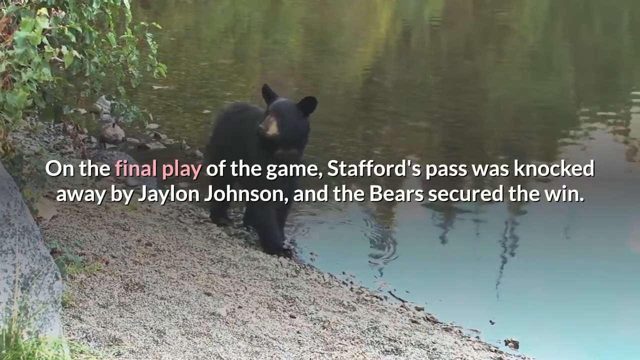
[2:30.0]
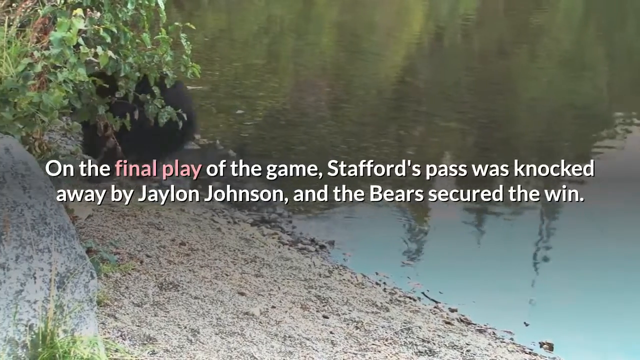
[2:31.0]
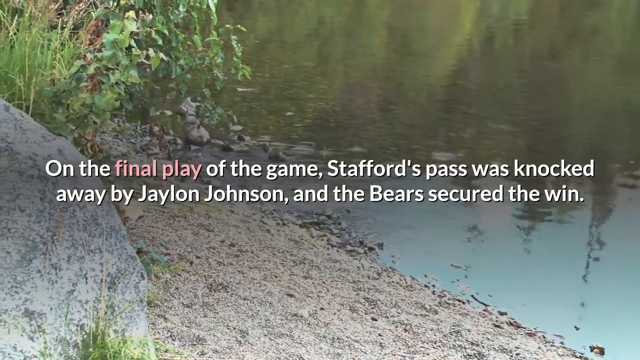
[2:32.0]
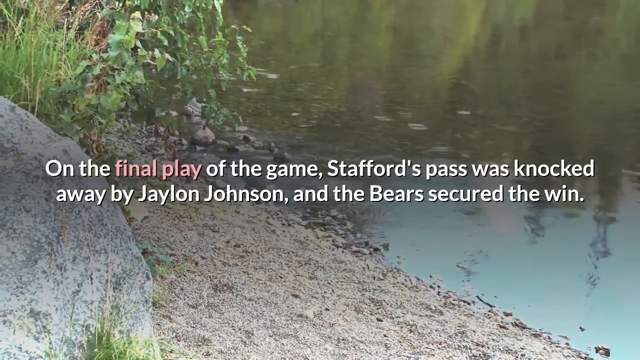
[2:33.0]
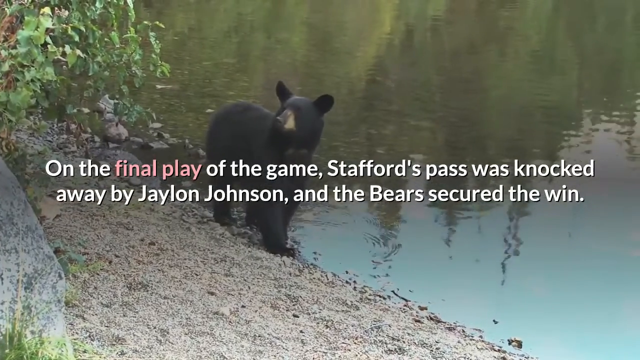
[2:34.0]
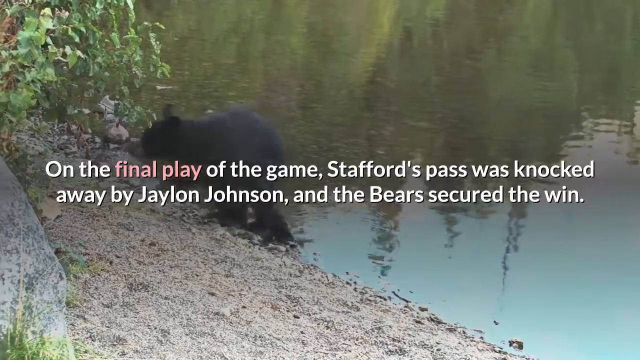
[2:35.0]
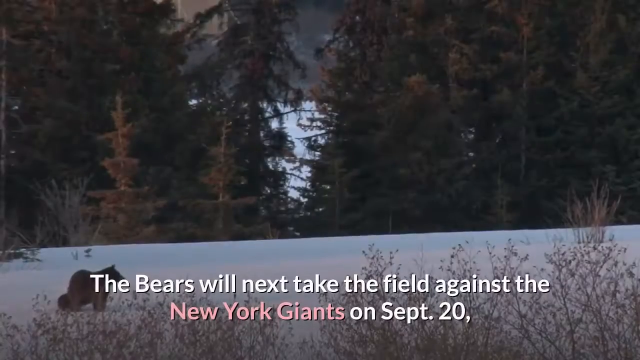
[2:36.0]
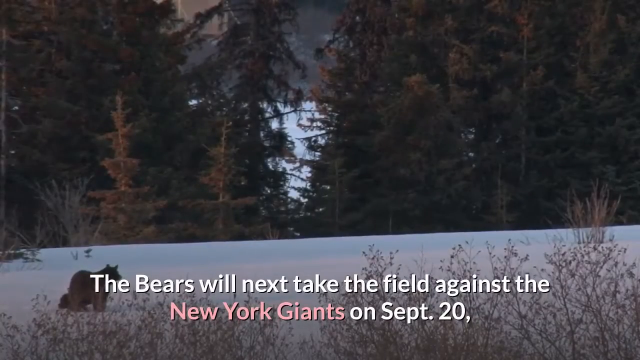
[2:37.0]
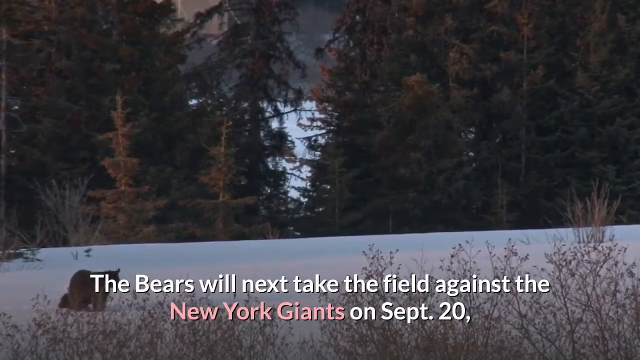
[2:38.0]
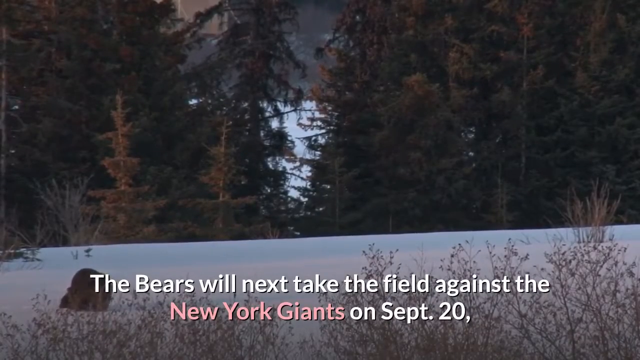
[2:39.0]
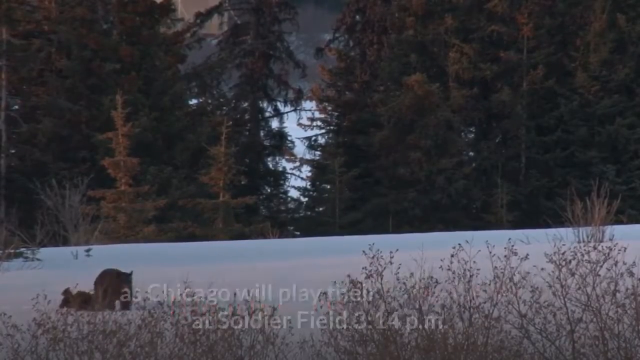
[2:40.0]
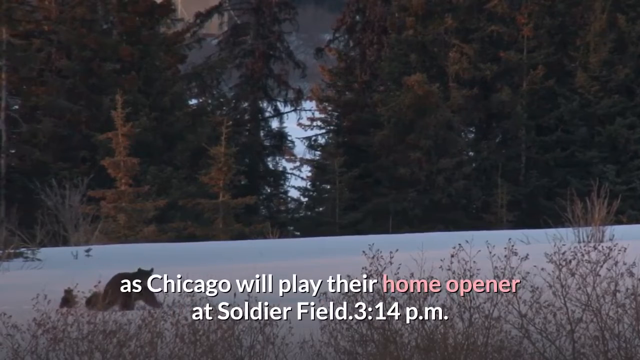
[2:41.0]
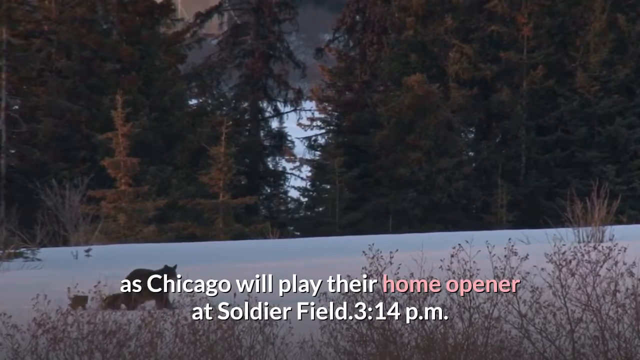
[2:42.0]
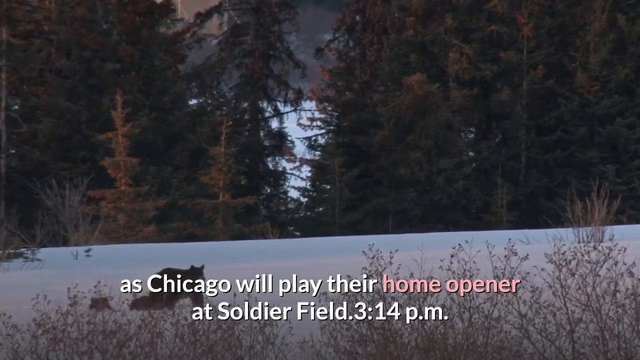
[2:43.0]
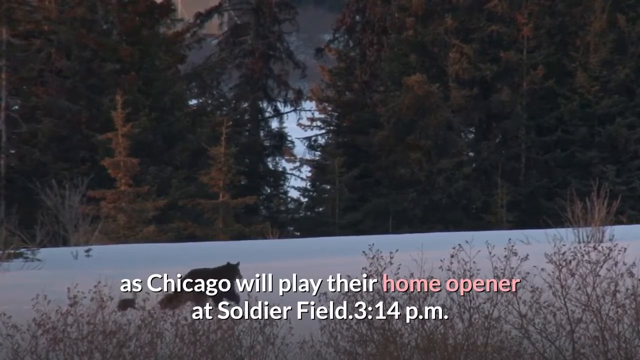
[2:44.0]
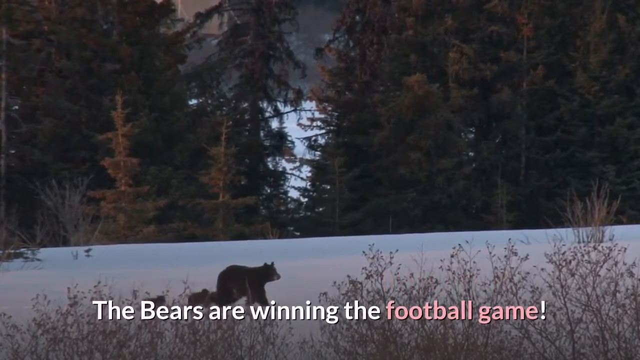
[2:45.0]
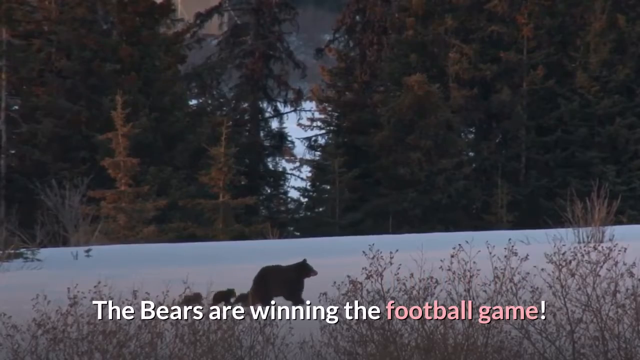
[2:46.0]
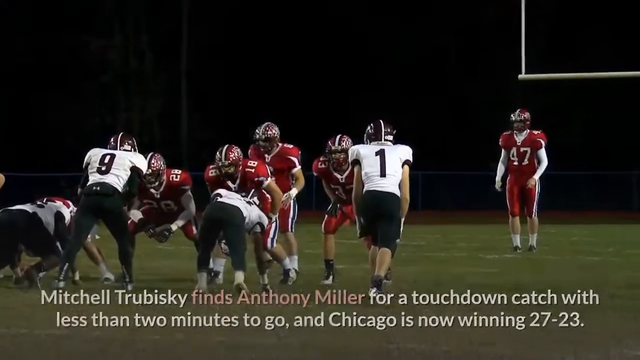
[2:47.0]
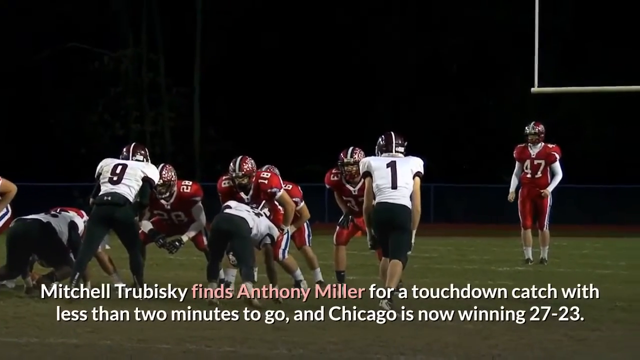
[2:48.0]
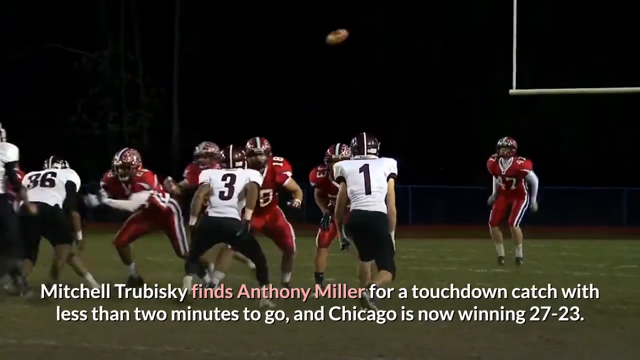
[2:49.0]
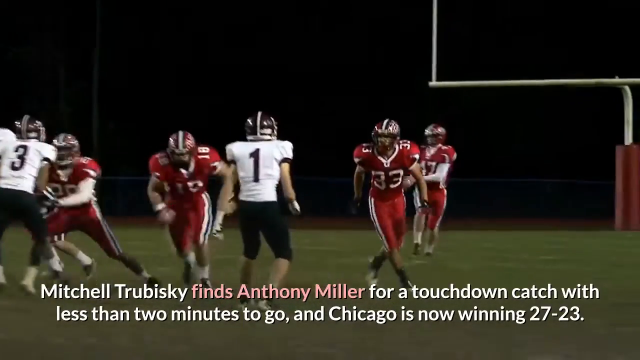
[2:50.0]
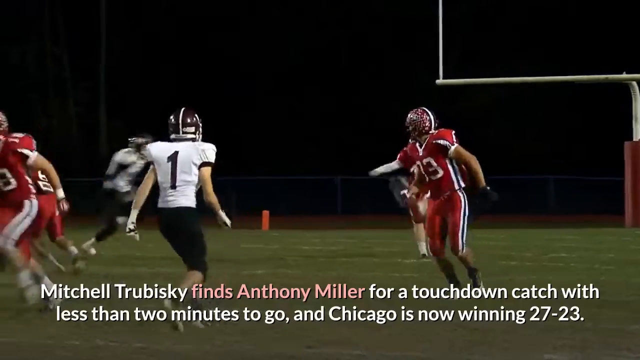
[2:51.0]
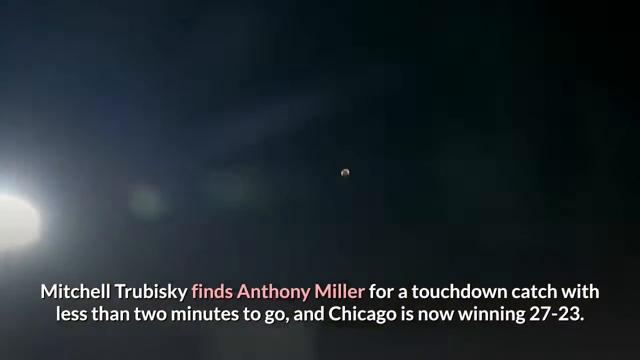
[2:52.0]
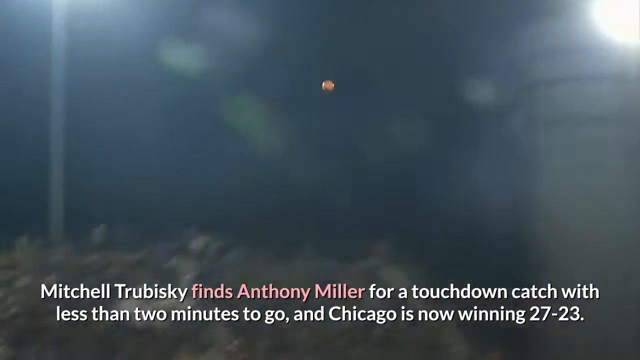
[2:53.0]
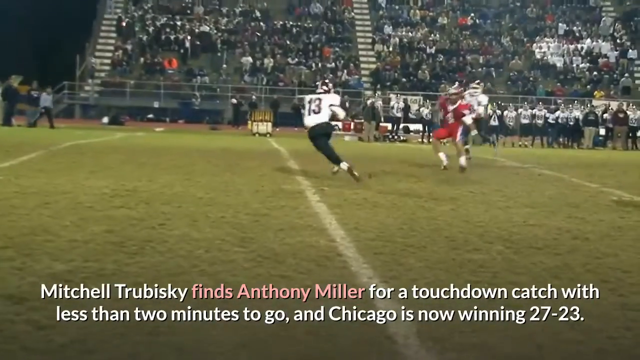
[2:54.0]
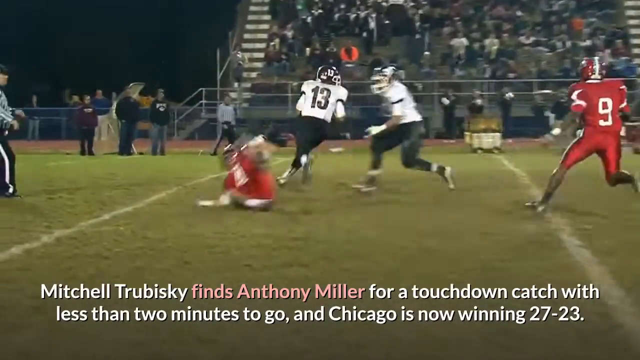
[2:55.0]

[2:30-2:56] Text reads "on the final play of the game, Stafford's pass was knocked away by Jalen Johnson and the Bears secured the win," over a background of the young bear along the riverbank looking to eat and running away. The next frame shows a white, snow-covered forest, with text reading "the Bears will next take the field against the New York Giants on September 20th, as Chicago play their home opener at 3.14 p.m." A bear then walks on the ice with three bear cubs, and the text continues "the Bears are winning the football game." Next is a football match between the red team and the white team, with text at the bottom reading "Mitchell Trubisky finds Anthony Miller for a touchdown catch with less than two minutes to go" as a red team member kicks the ball up into the sky to be caught by a white team member wearing jersey number 13. Finally, there is a view of people seated on chairs in the stadium audience.